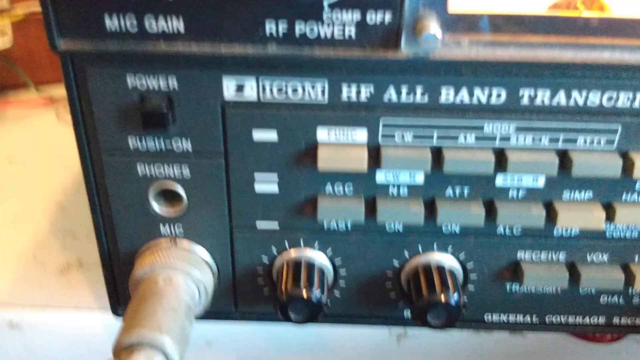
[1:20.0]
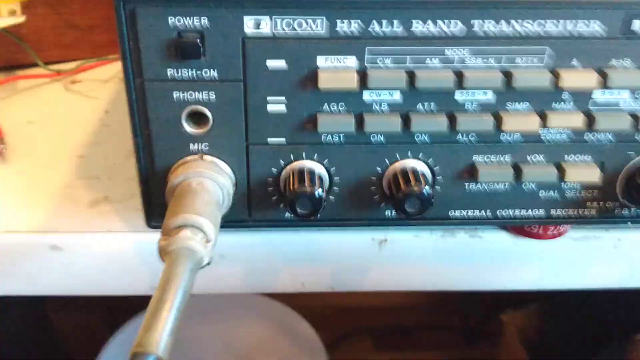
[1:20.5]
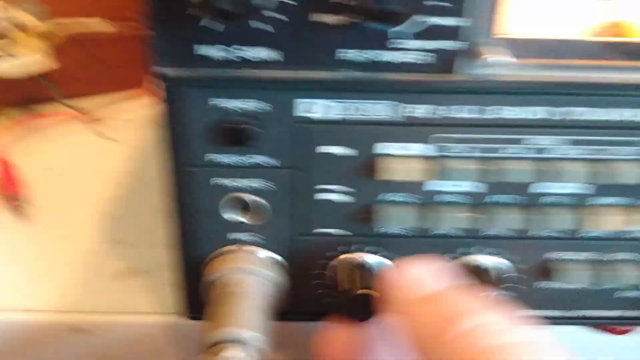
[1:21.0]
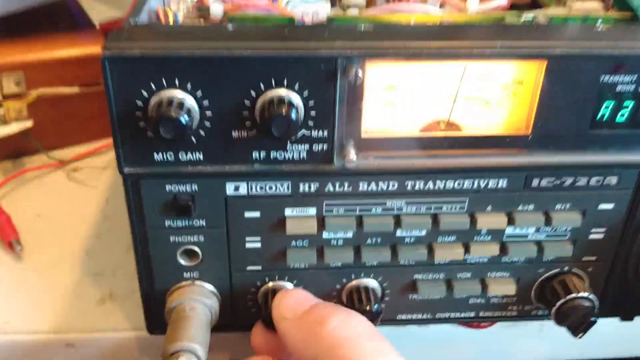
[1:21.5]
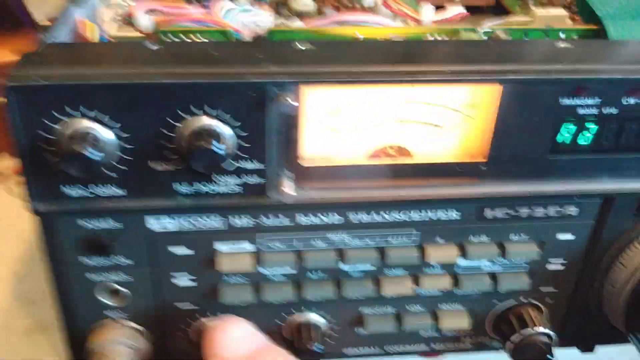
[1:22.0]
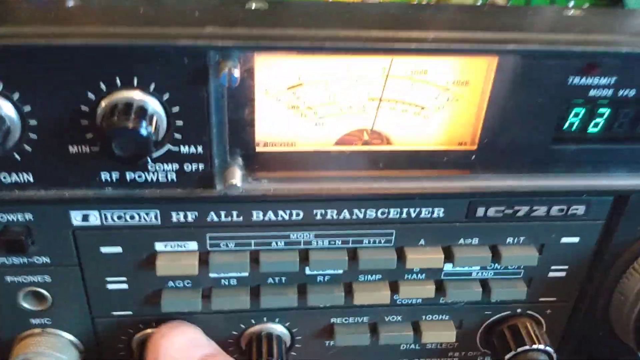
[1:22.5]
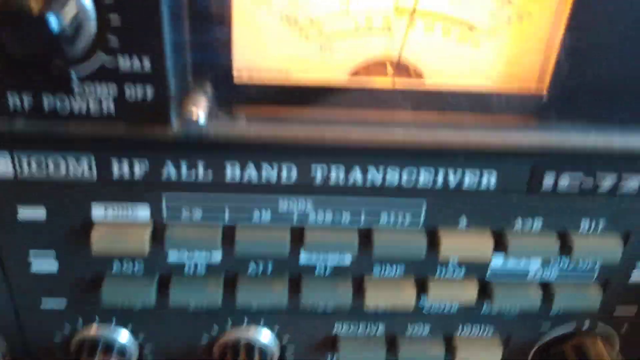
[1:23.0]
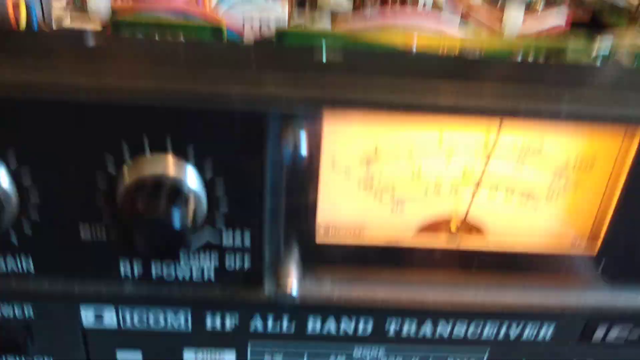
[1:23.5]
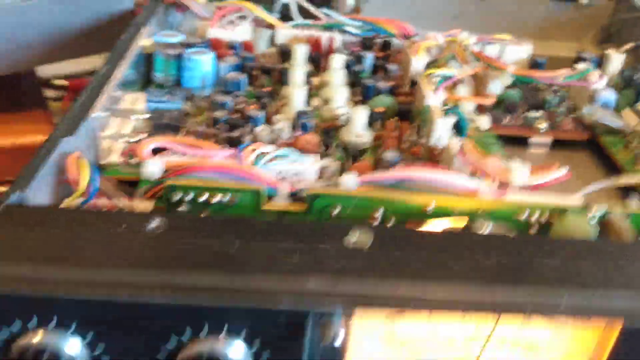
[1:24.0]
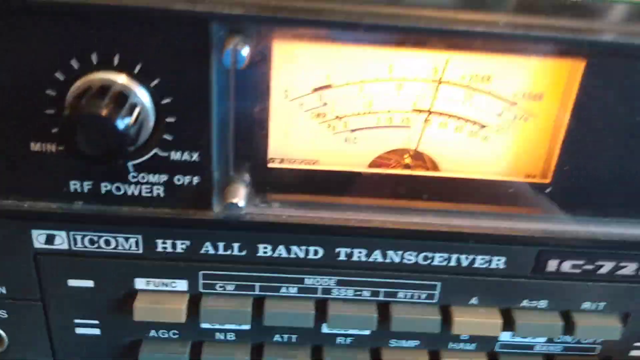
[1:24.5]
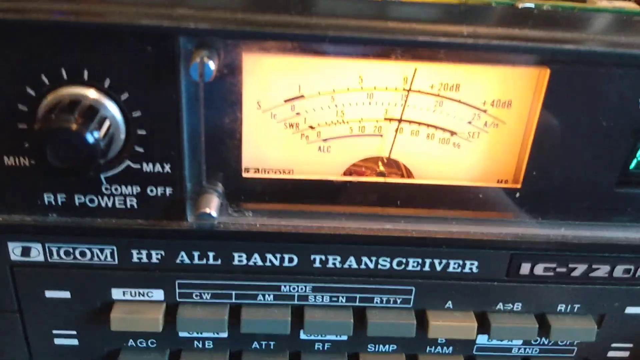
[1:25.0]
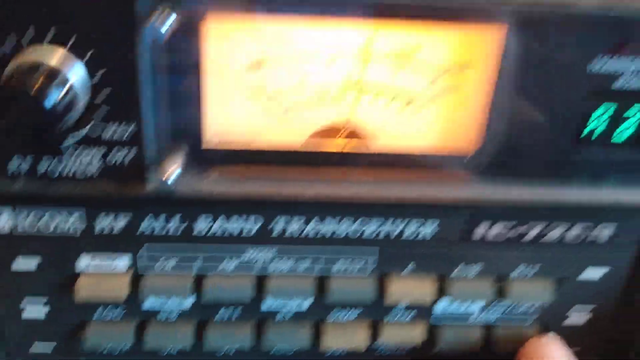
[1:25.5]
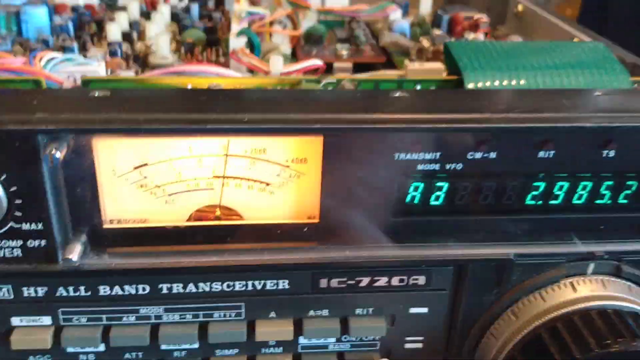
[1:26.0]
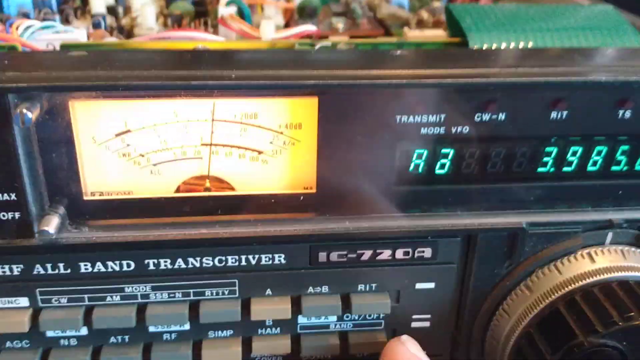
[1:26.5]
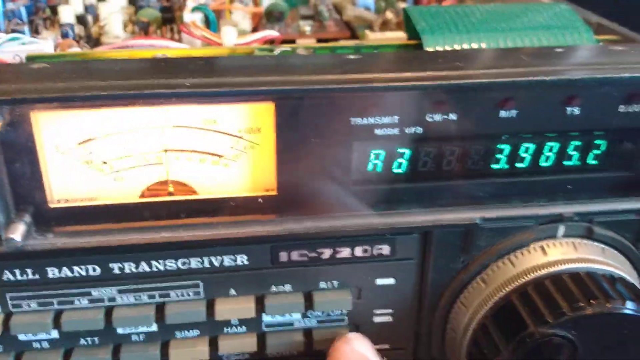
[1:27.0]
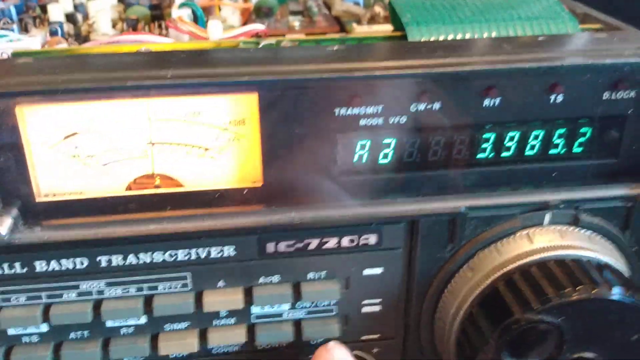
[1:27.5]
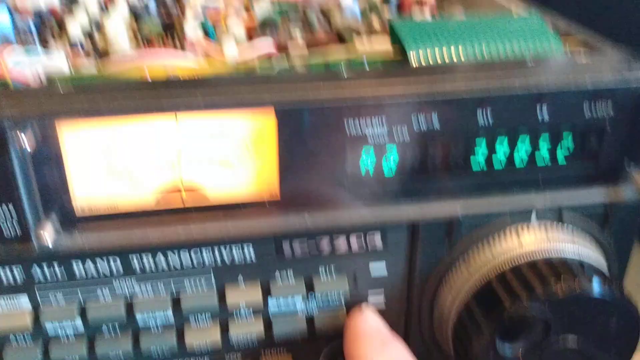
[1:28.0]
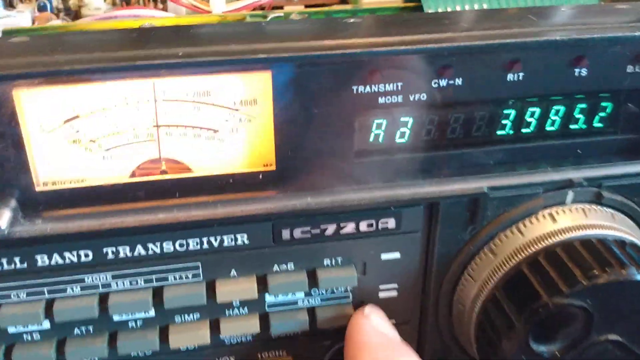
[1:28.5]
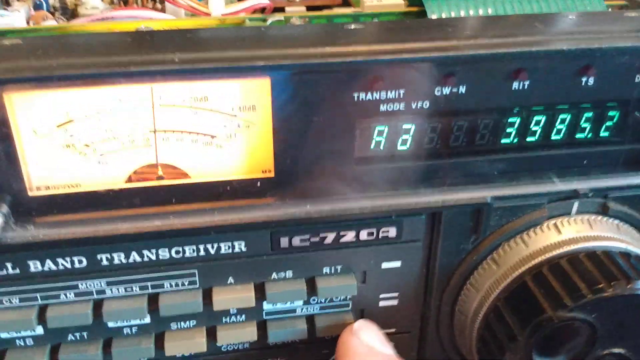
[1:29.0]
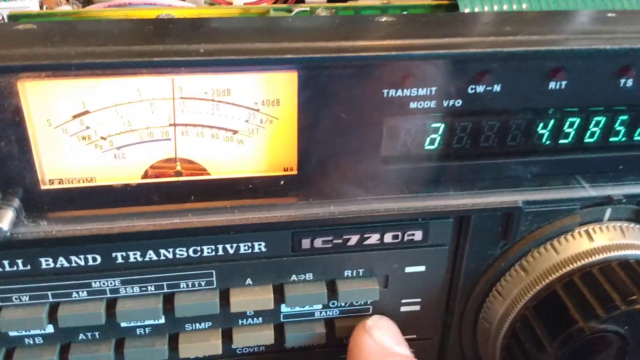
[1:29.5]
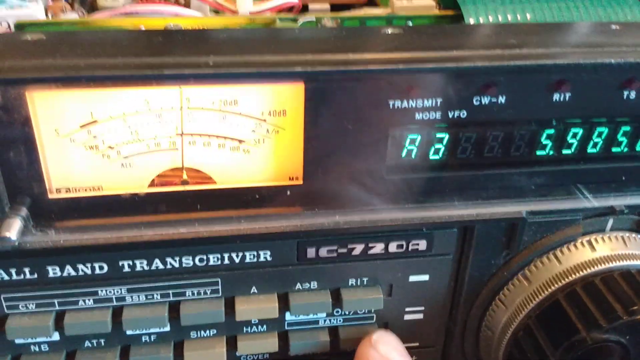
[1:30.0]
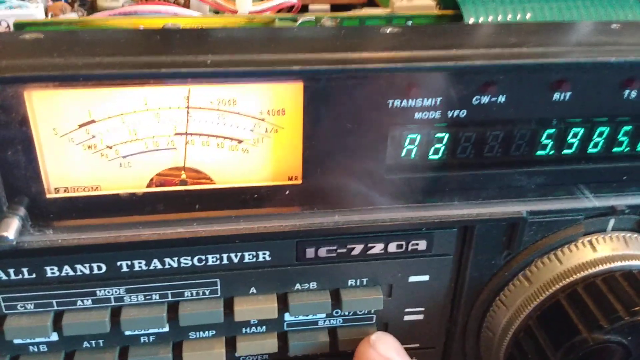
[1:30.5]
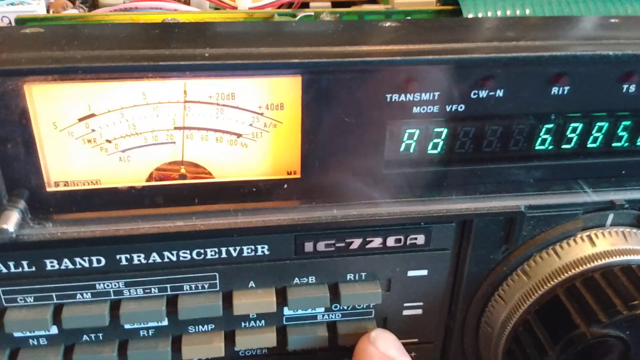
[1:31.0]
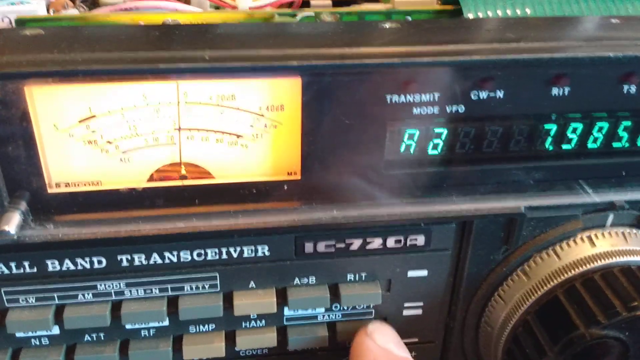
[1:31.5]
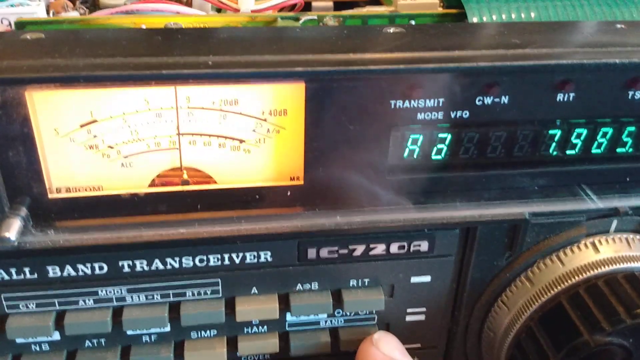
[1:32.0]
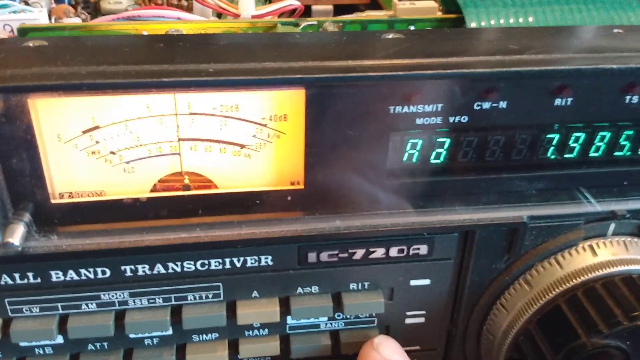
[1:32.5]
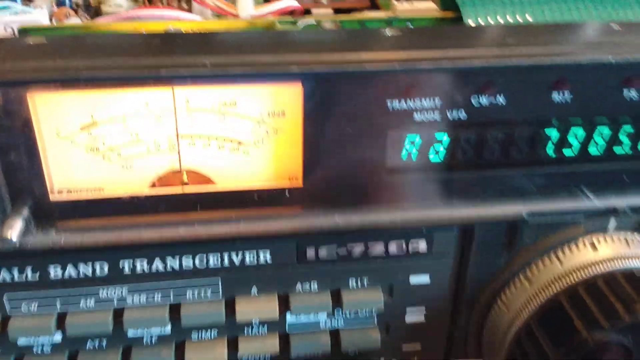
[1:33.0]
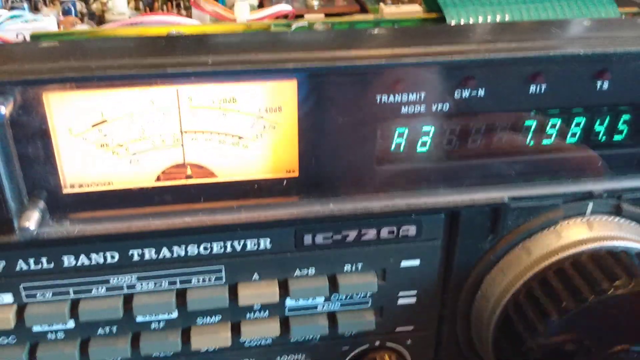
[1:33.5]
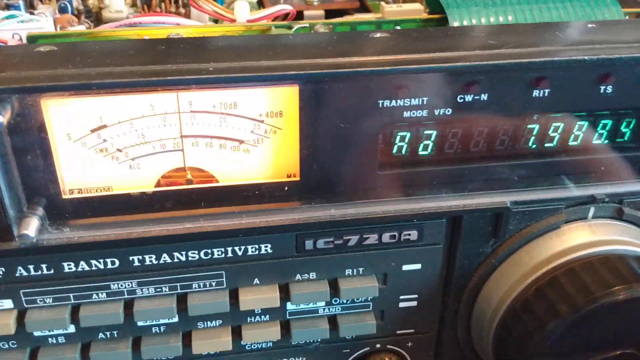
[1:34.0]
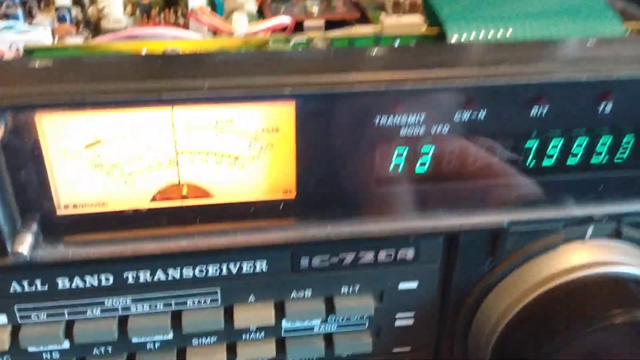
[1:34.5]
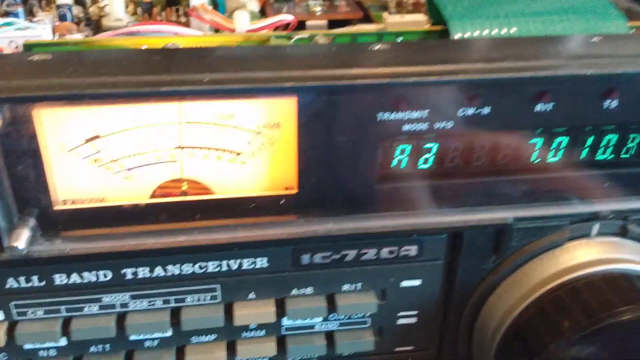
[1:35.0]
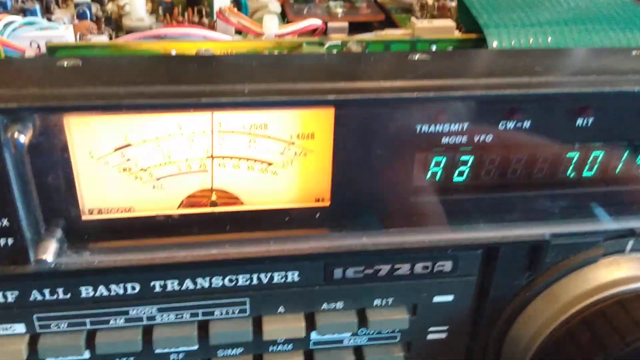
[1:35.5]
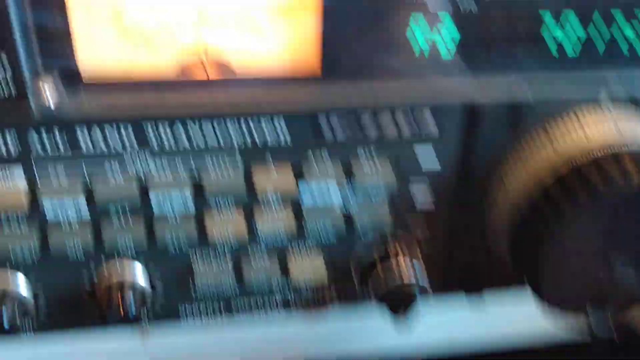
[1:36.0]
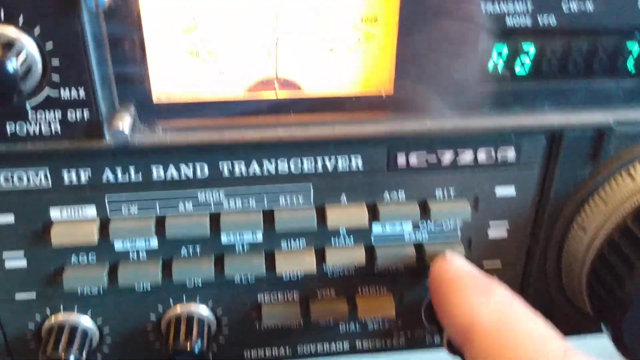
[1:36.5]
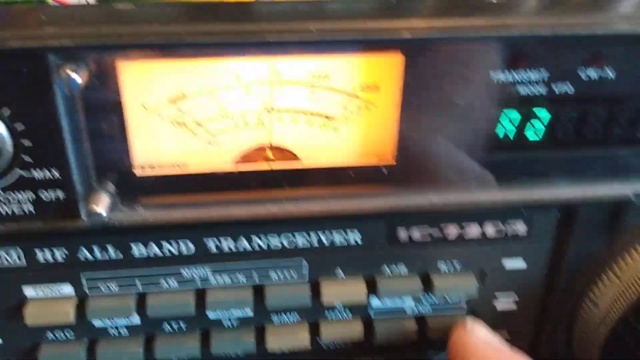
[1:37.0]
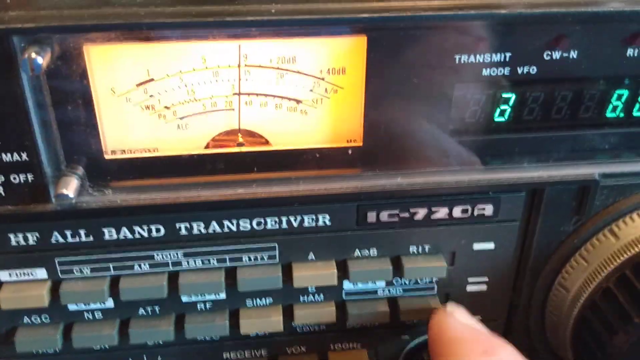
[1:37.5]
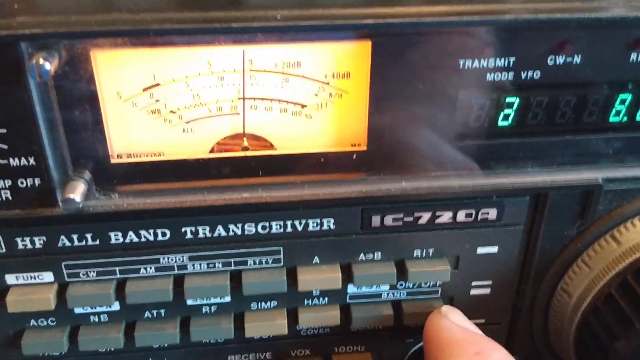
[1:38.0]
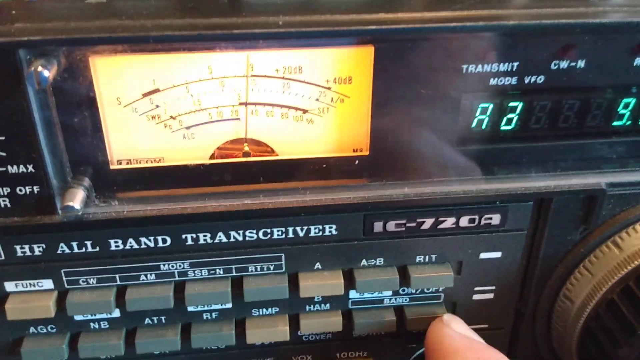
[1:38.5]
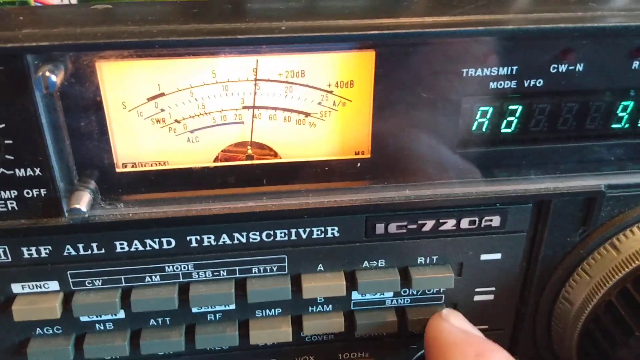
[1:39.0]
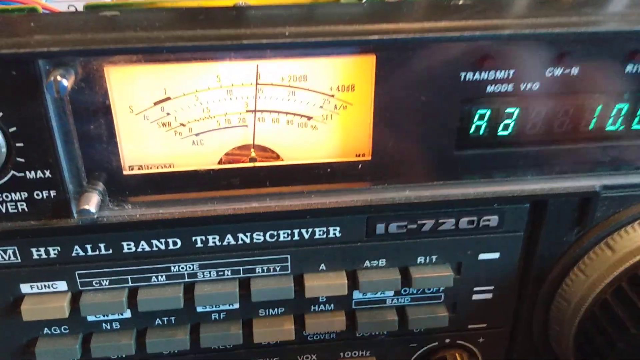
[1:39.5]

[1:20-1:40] The front of the transceiver is shown, reading "HF all band transceiver". A beige wire is plugged into the bottom left where it says "mic". A hand reaches in and turns a knob on the lower left while the camera zooms in on the needle measurement as the knob is tuned. The camera is briefly raised to look at the innards of the transceiver during this. The hand then turns another knob on the lower right. The device appears to be the IC720A. As the knob turns, the digital readings on the far right appear to change; under the label "RIT", the reading goes from 698 to 798. The digital display looks like that of a digital clock, with green numbers, which then change quite rapidly.